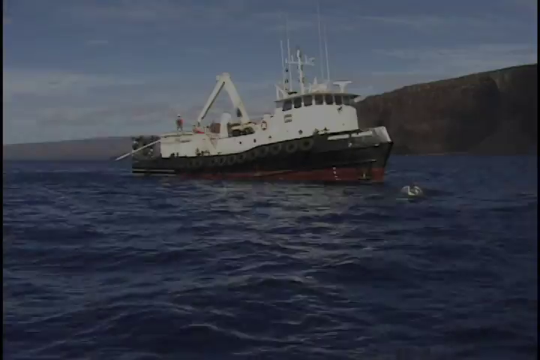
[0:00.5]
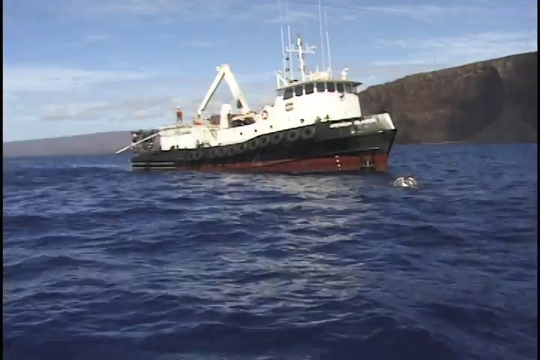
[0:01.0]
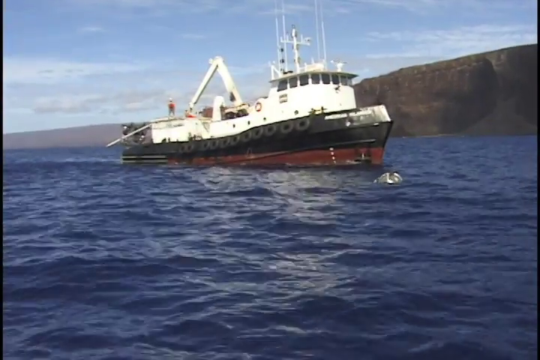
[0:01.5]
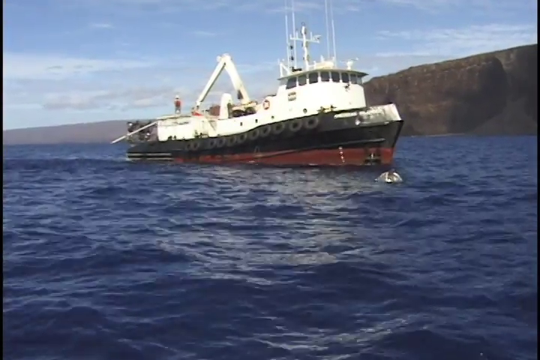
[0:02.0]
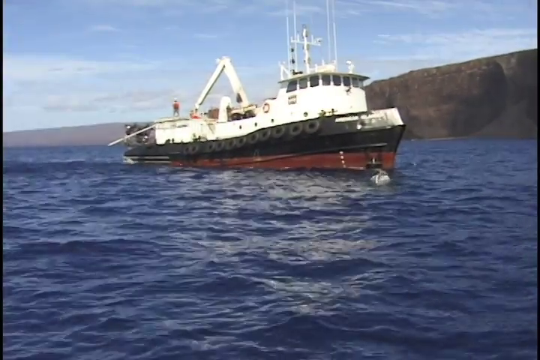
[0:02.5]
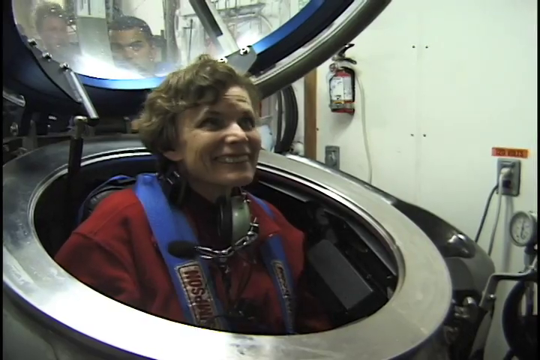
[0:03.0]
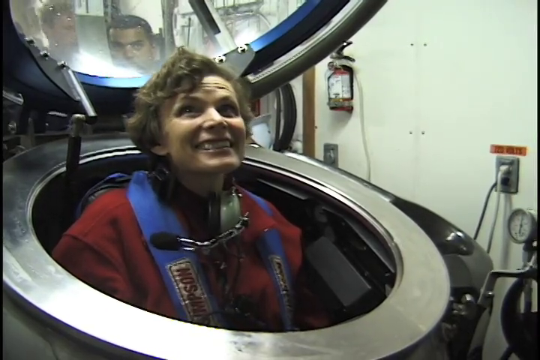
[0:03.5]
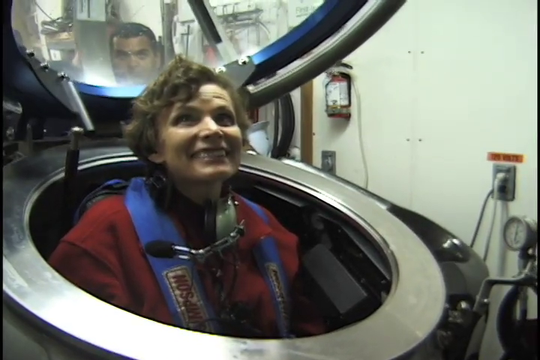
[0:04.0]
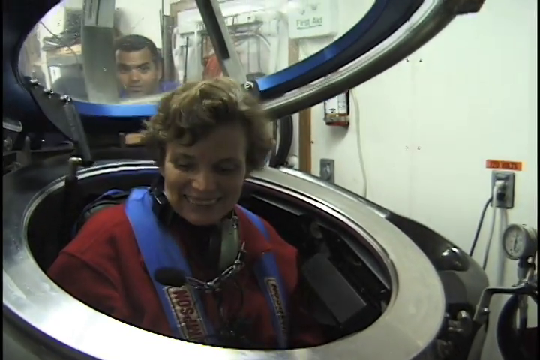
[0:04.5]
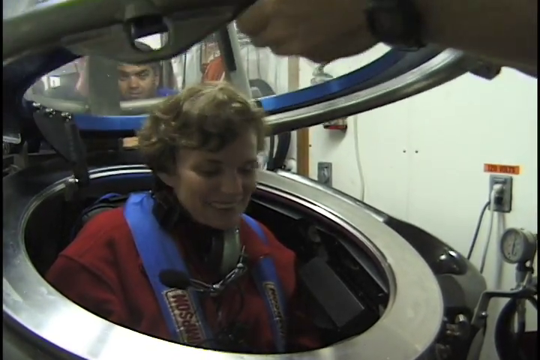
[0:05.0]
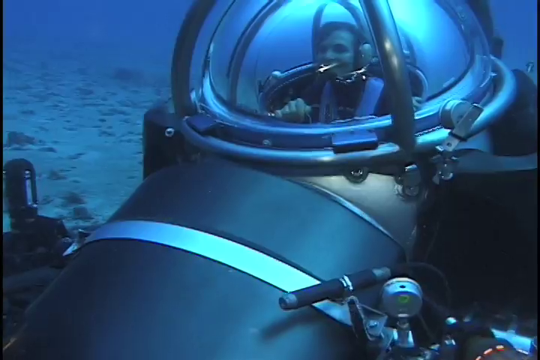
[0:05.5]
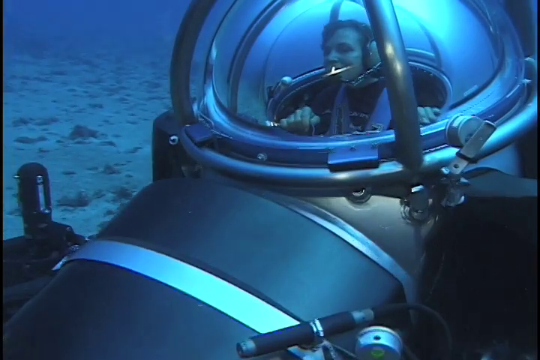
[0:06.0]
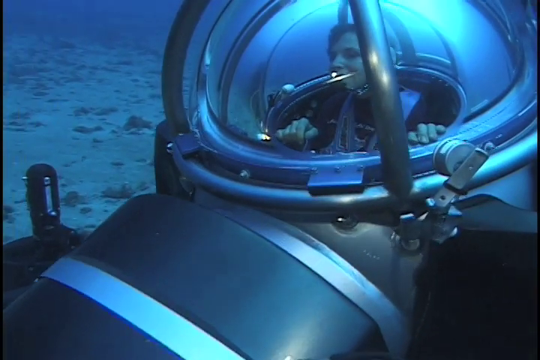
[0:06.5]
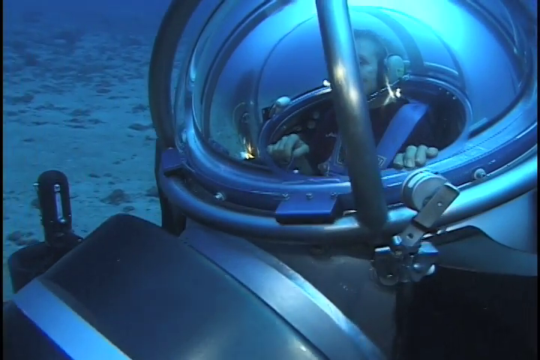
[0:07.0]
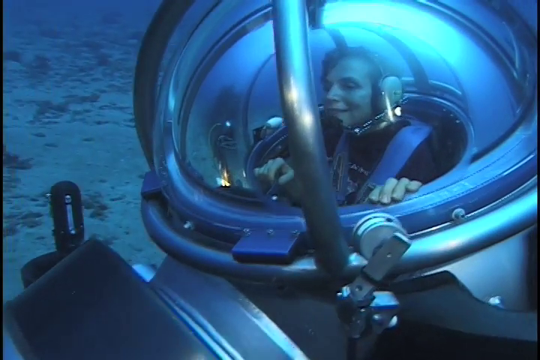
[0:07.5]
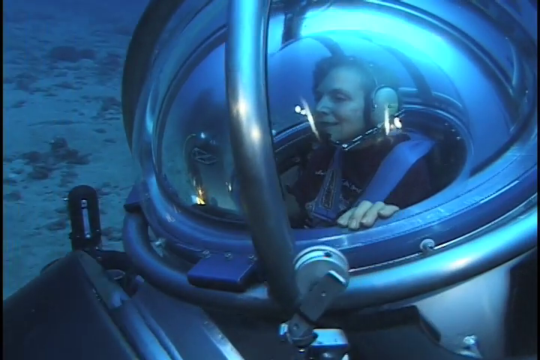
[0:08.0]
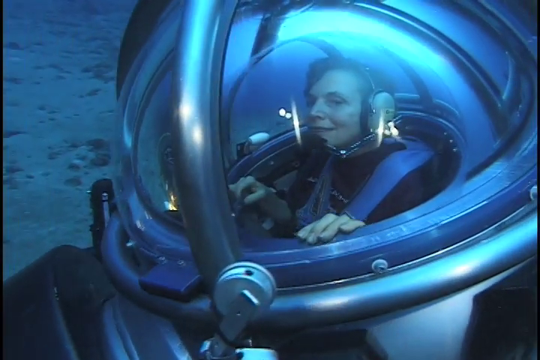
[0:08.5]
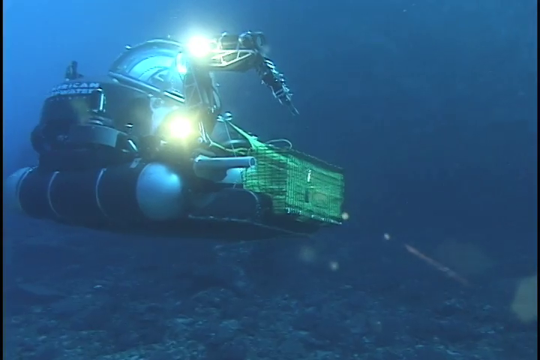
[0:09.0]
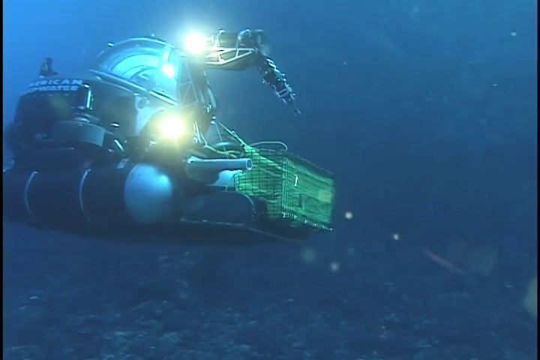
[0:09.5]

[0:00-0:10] A boat advances across the water, with a mountain and terrain in the background under a clear sky on a calm-looking day. In front of the boat there appears to be a small silver metal sphere approaching it, about to touch it. A woman on the boat is about to enter what seems to be a very small submarine, shaped like a sphere with a transparent part from which she will drive it. Very rough footage then shows the small submarine underwater.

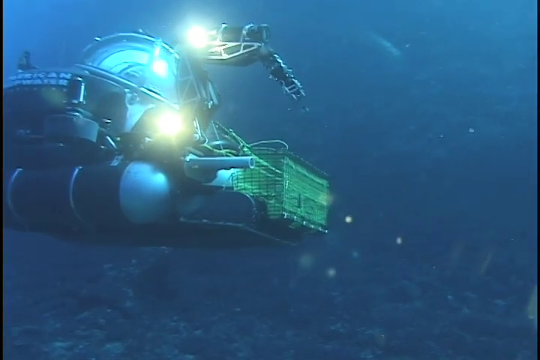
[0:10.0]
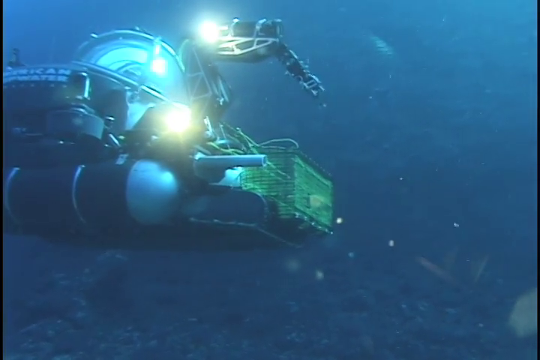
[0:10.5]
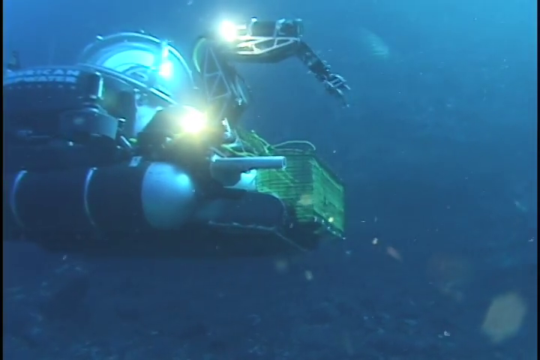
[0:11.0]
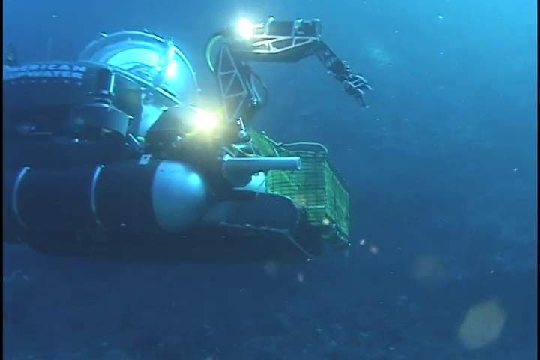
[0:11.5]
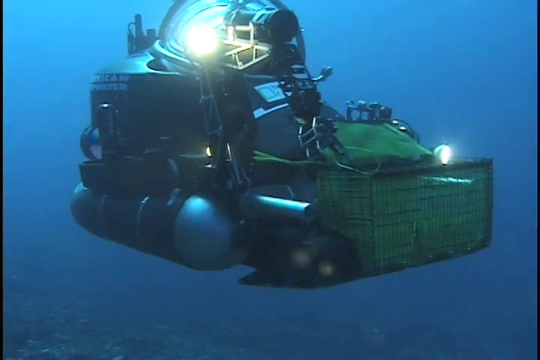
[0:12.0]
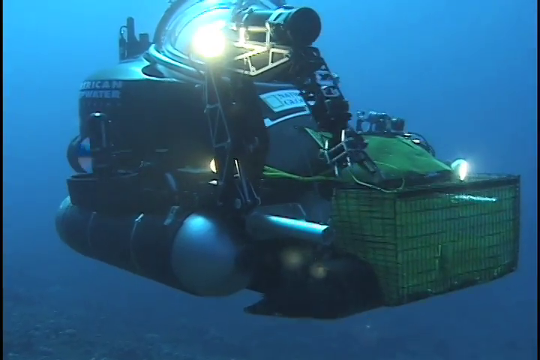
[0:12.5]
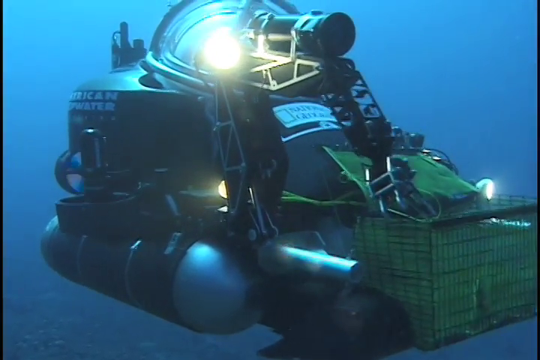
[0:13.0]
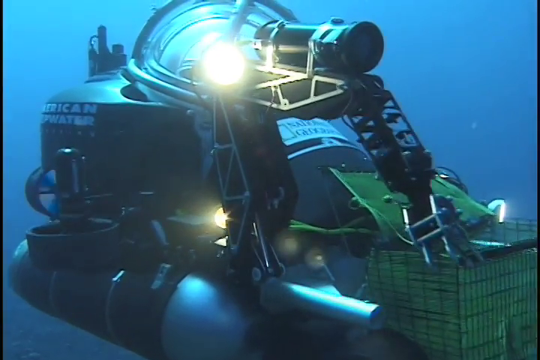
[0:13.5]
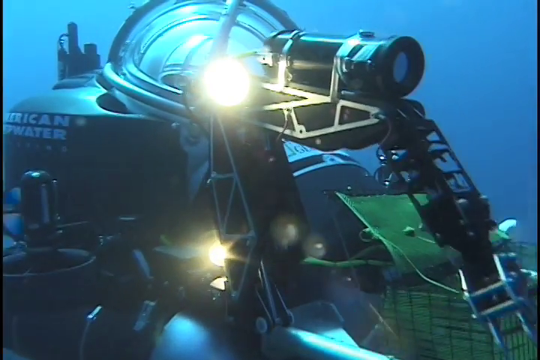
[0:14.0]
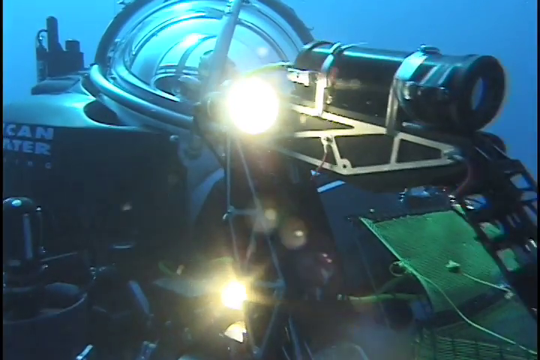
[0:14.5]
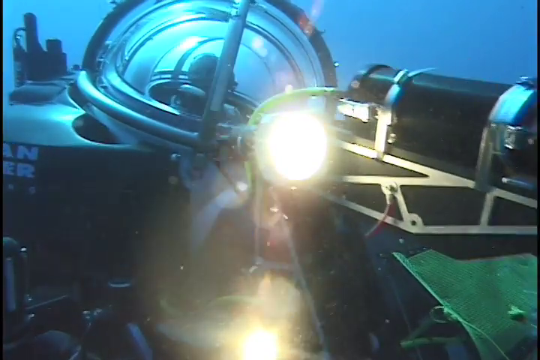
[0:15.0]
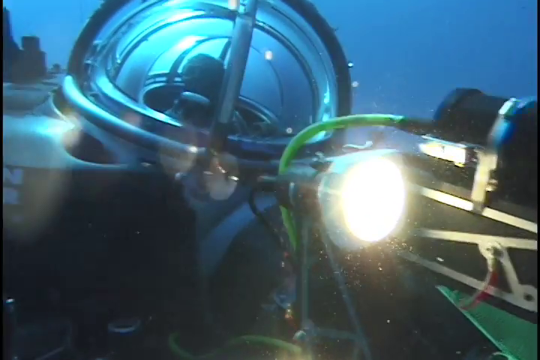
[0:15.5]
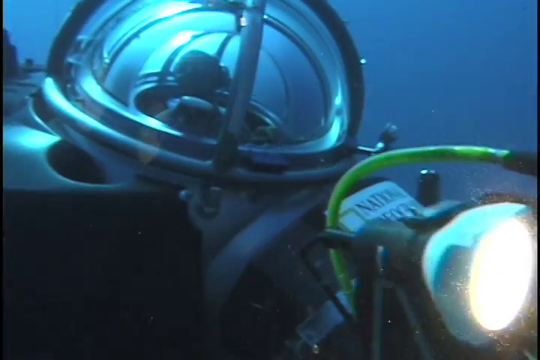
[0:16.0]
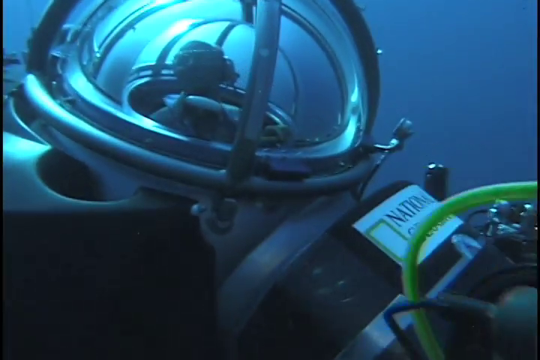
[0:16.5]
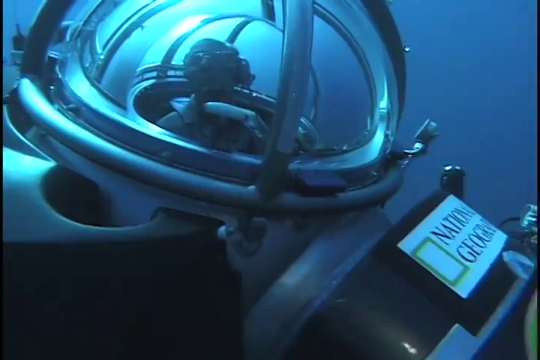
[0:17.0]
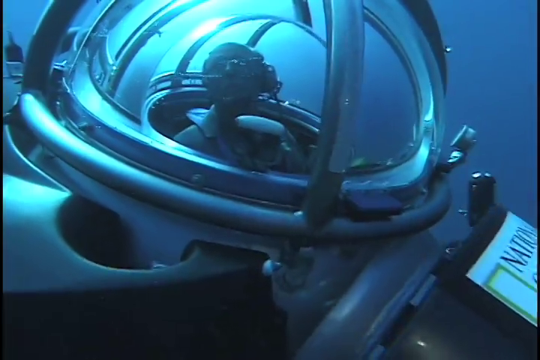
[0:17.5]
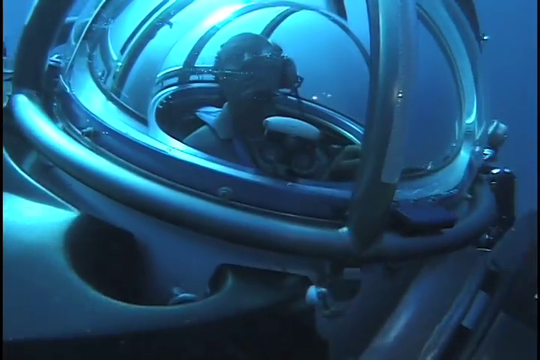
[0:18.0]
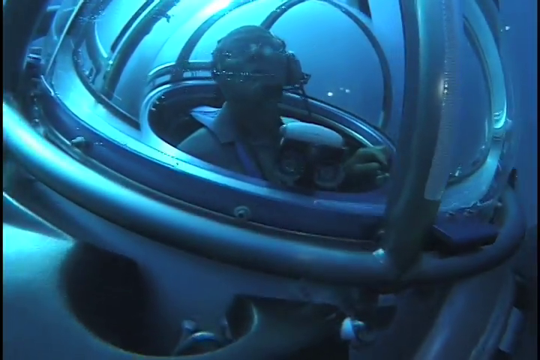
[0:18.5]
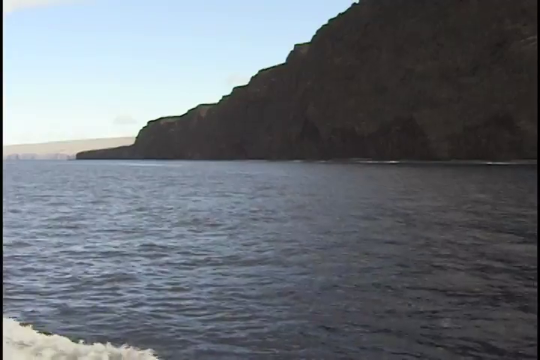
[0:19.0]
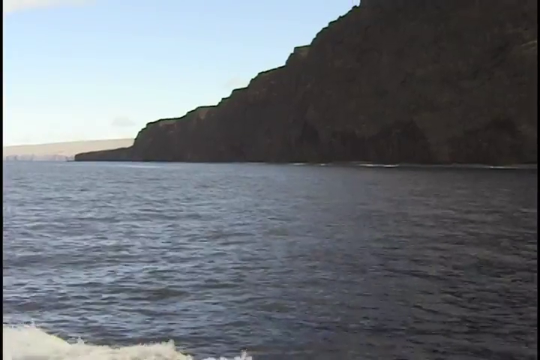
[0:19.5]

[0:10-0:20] The small submarine continues under the sea. It is very compact, probably used for research or something similar, and it has the National Geographic logo on the front. It has a small arm that seems meant for holding things and for lighting, since a lamp is attached to it. The submarine advances a little slowly. It also has a basket in front of it, probably for putting things that are picked up.